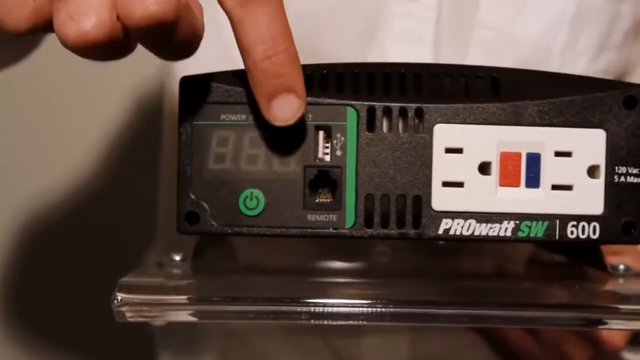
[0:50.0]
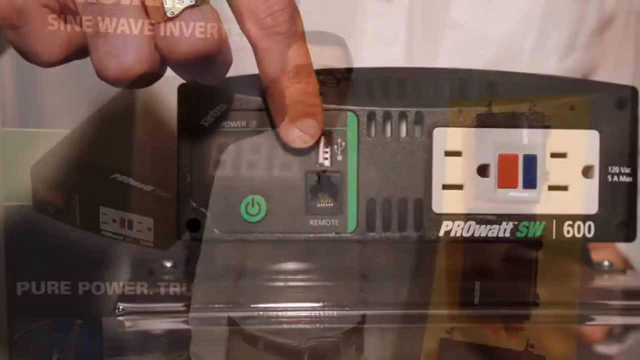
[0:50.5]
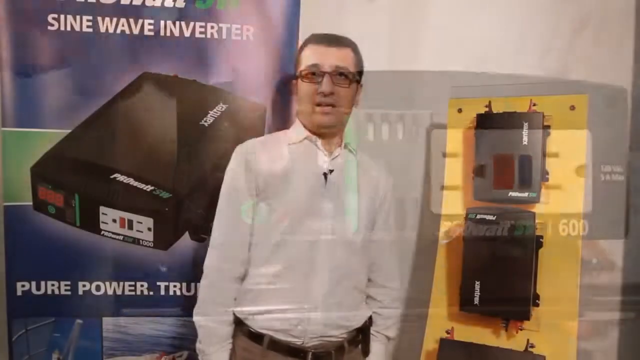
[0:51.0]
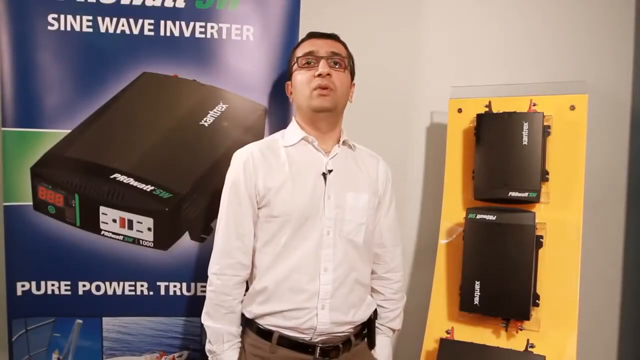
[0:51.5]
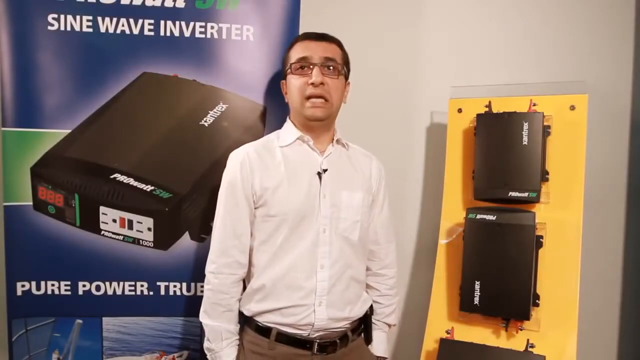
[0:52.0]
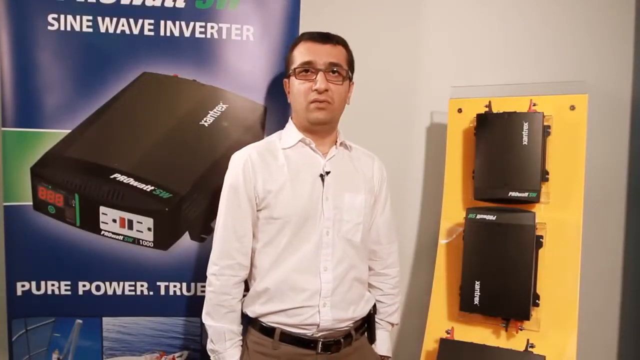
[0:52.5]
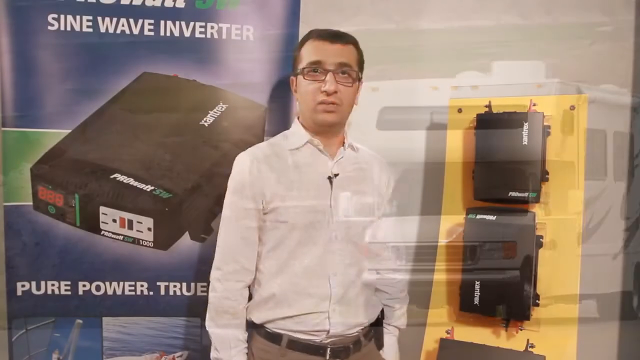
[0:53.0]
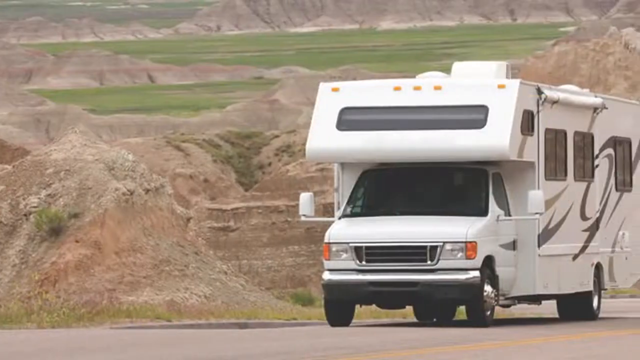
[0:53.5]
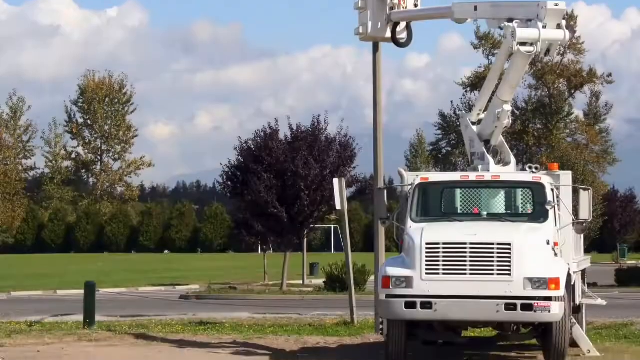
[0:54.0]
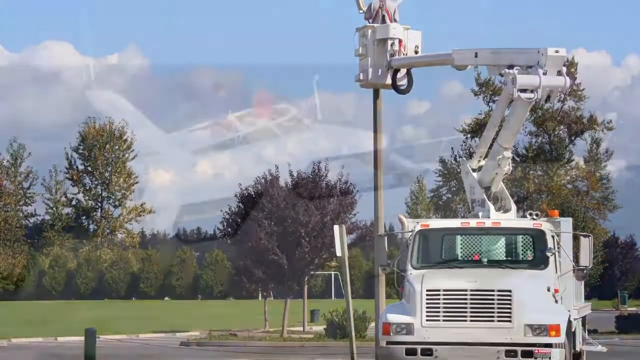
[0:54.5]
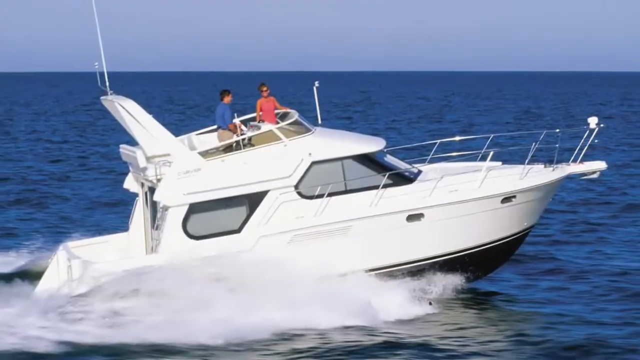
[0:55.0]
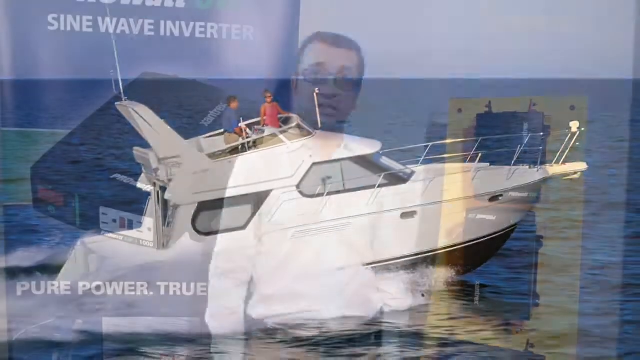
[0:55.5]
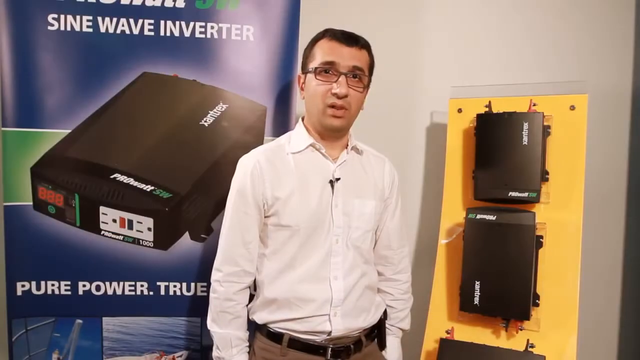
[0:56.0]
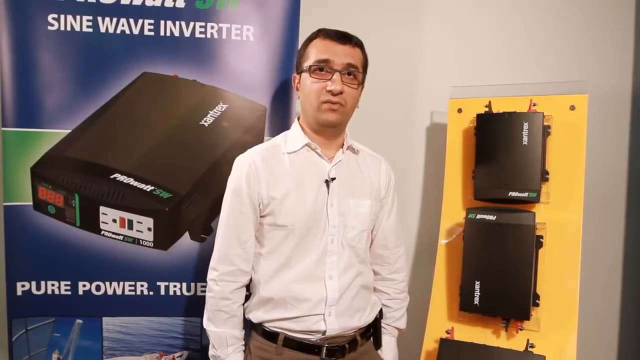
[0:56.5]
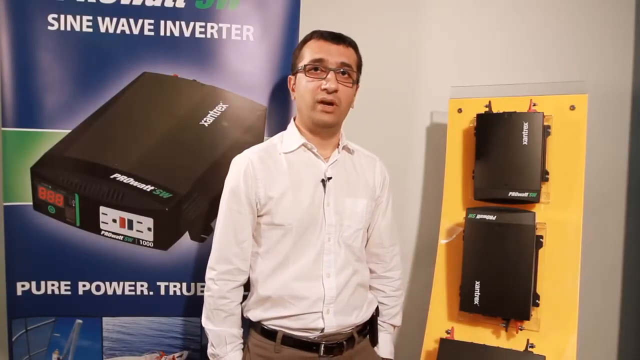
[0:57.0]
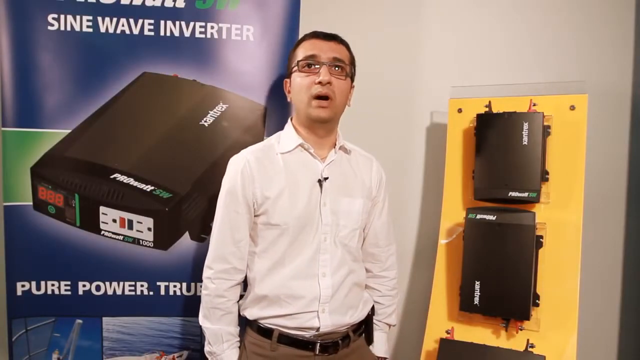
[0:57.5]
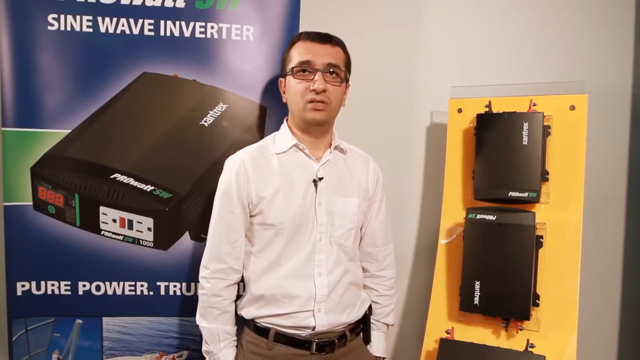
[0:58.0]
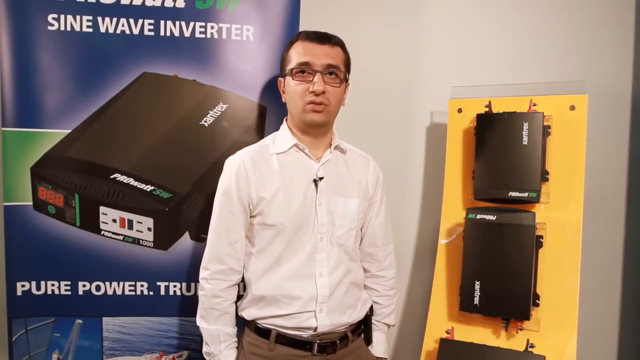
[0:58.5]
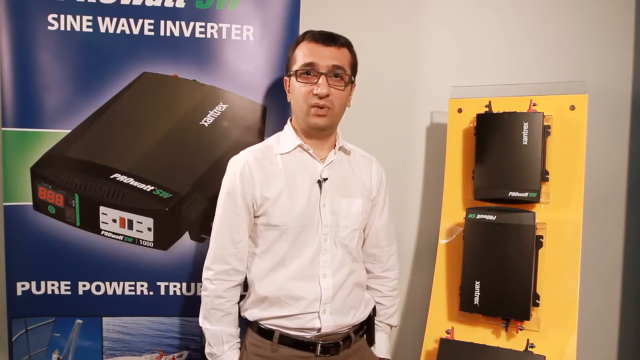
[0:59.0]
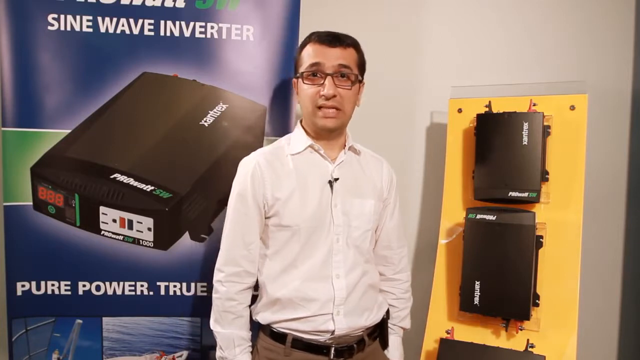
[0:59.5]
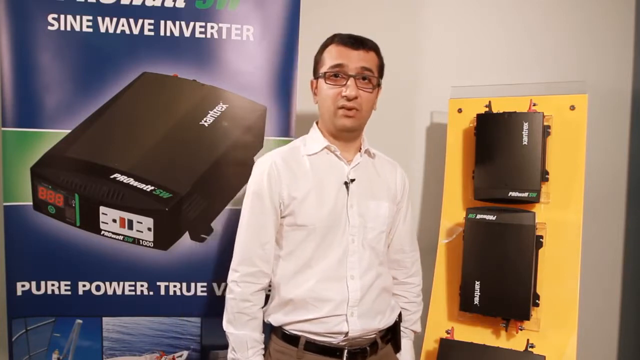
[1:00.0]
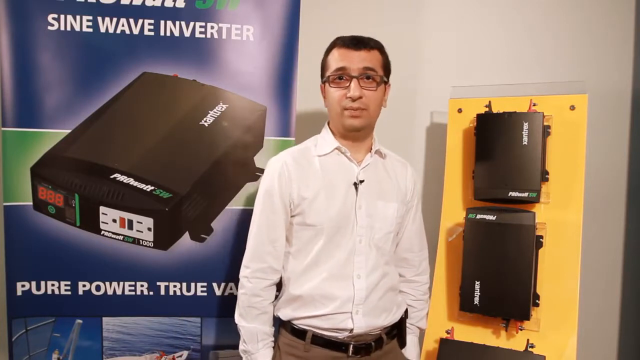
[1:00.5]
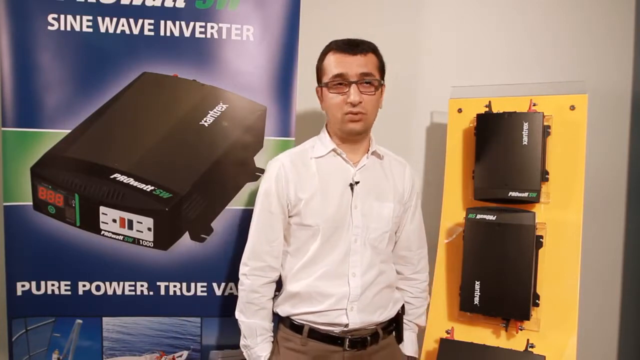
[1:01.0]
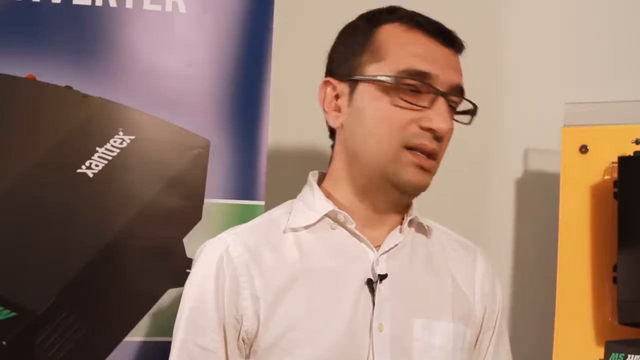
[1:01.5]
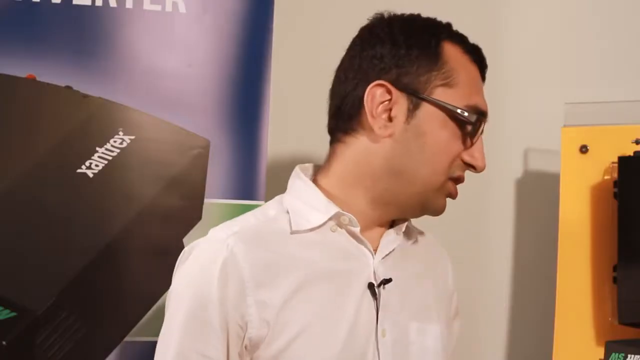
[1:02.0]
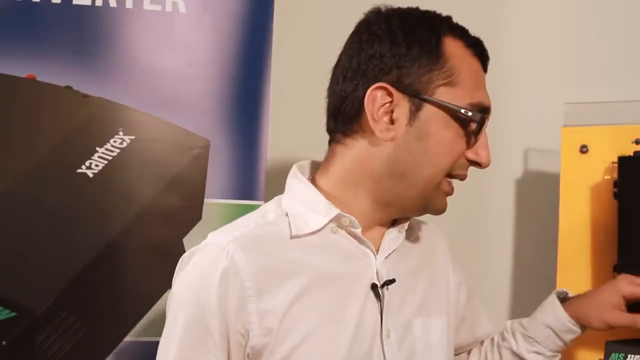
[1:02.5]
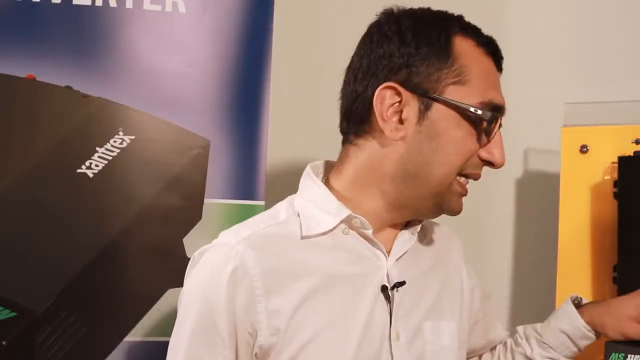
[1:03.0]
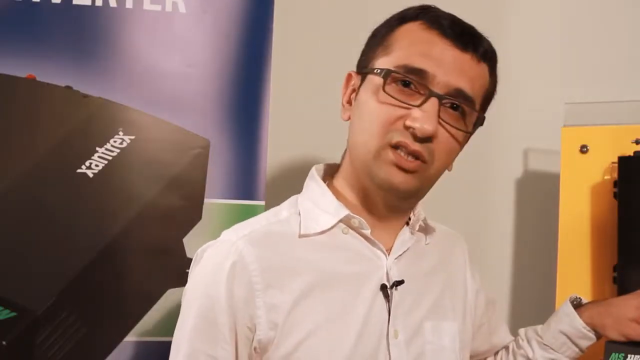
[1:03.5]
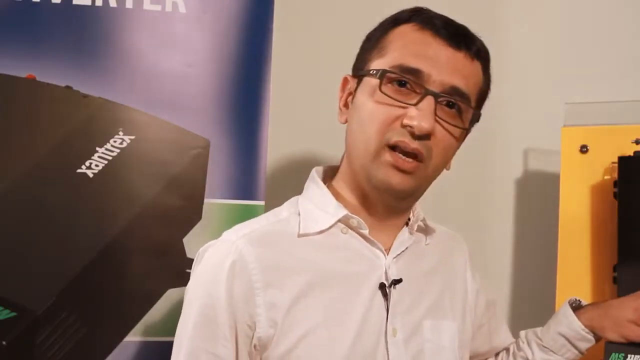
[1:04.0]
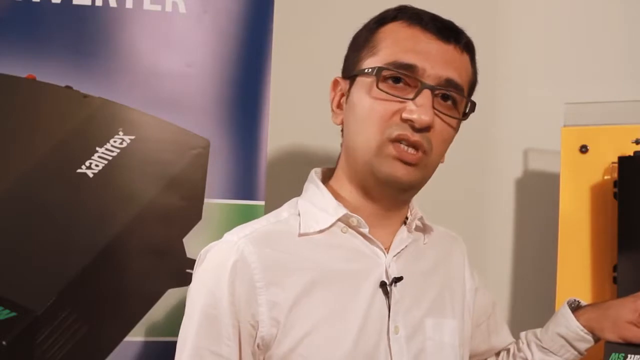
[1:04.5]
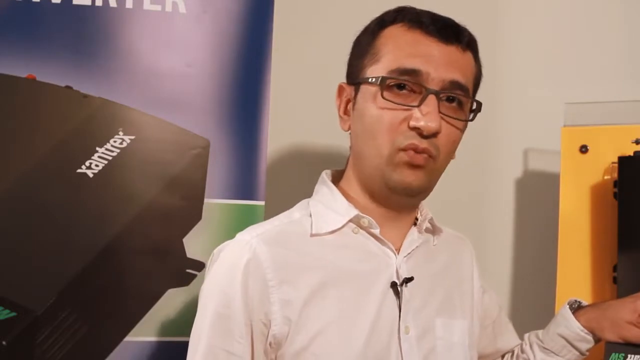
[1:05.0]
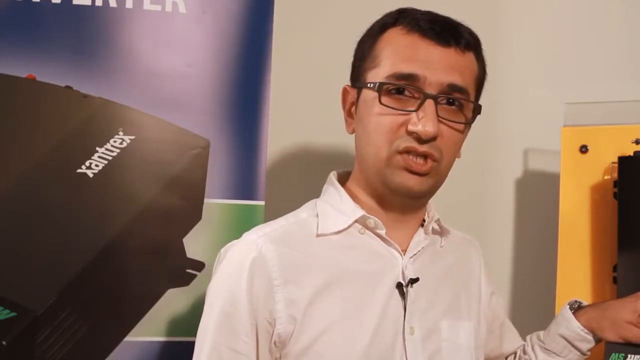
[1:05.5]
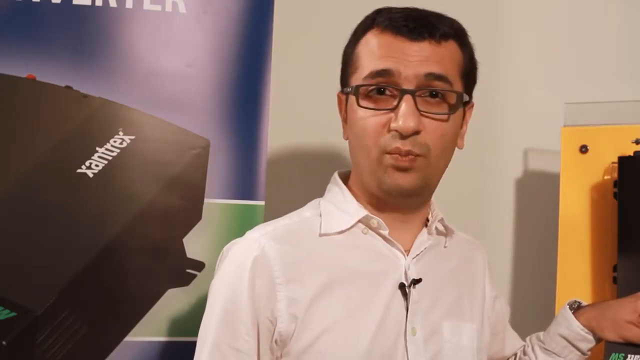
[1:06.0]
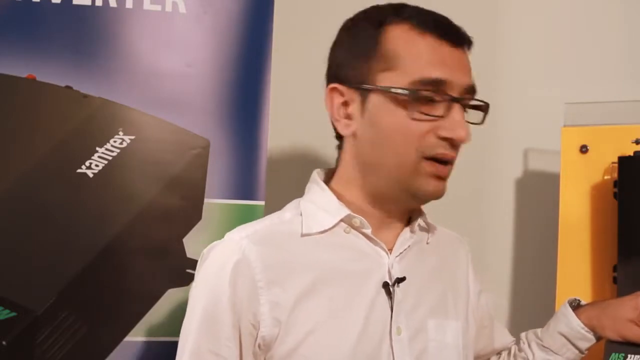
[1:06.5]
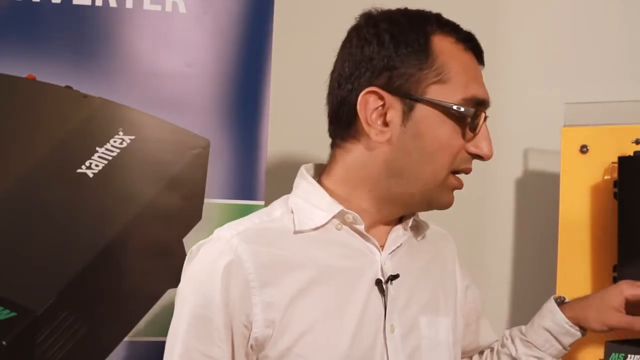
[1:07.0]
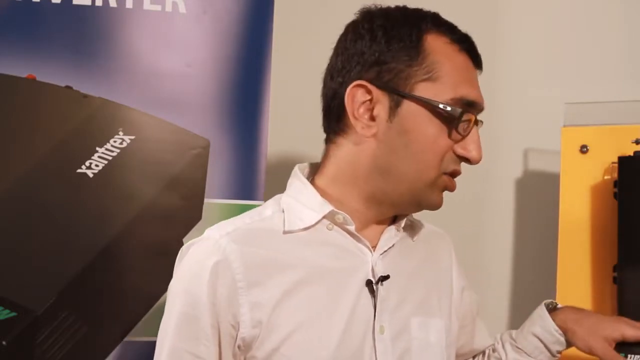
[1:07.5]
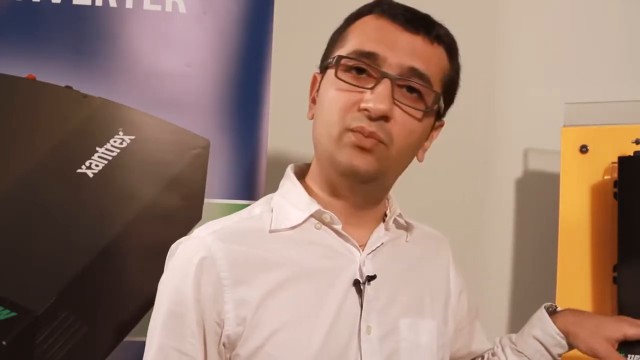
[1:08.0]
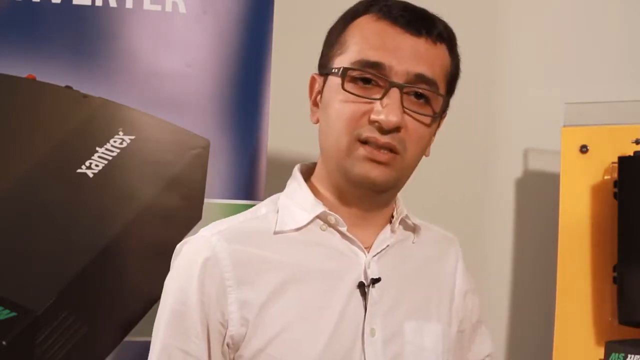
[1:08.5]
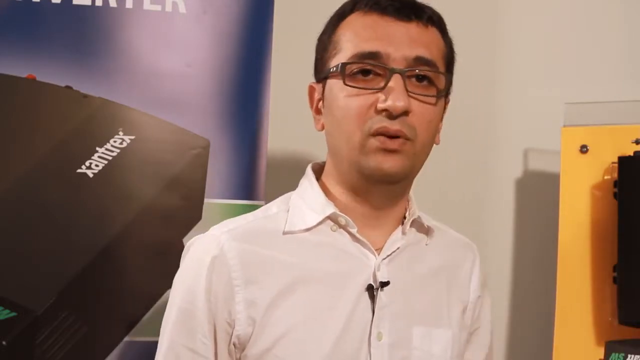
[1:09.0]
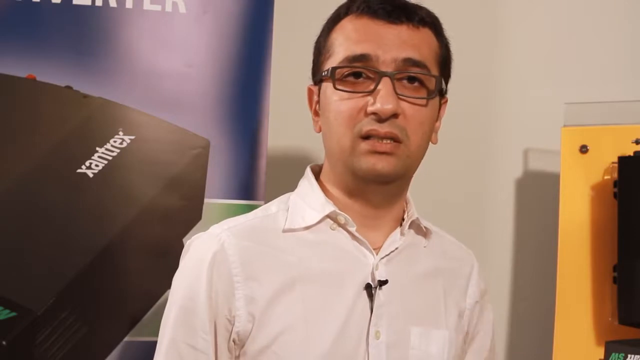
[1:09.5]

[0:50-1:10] The man points with his index finger to a USB port on the back of the device. He then stands next to a poster on his right, while on his left, the viewer's right, is a yellow board with several Xantrex wave inverters attached to it. He talks to the camera; he has black hair and glasses and wears a button-up shirt. The video then shows an RV out in a rocky area with grass and hills in the distance. Next, a boat is on the water, with a man in a blue shirt and khaki pants and a woman in peach clothing on the second floor of a large boat at sea. The video returns to the man in his small studio with the example, where he continues talking.